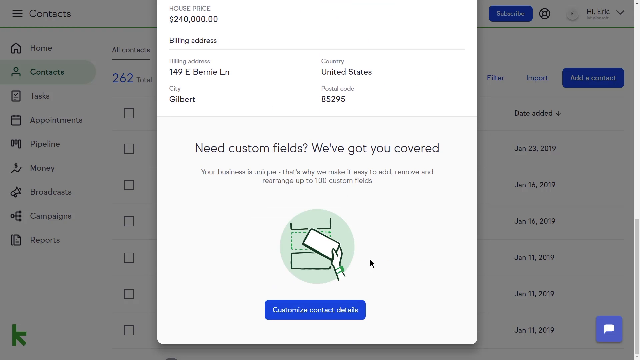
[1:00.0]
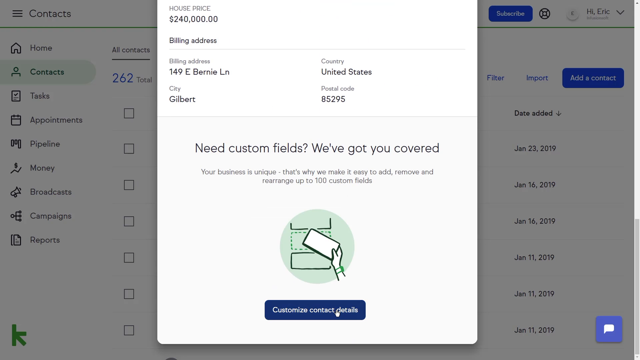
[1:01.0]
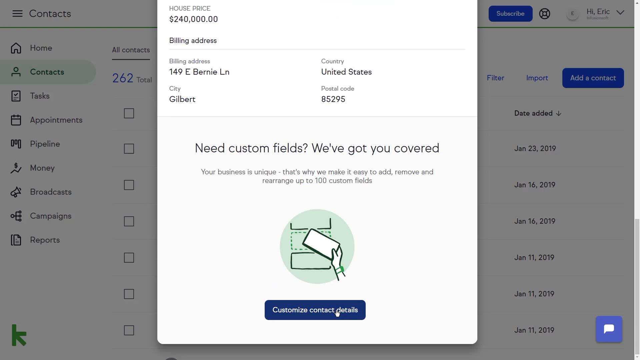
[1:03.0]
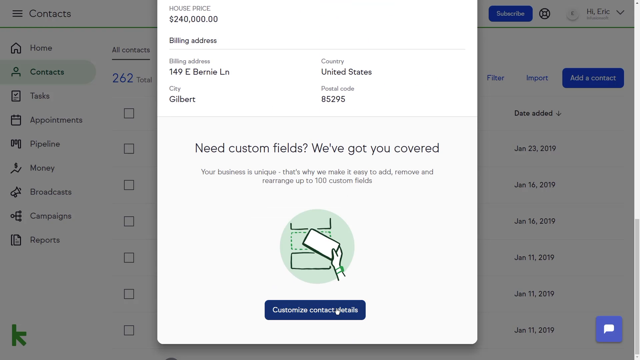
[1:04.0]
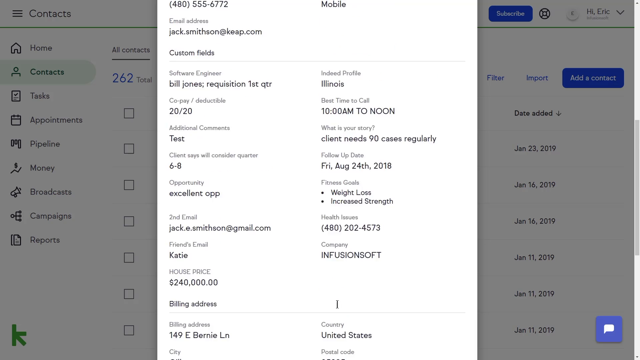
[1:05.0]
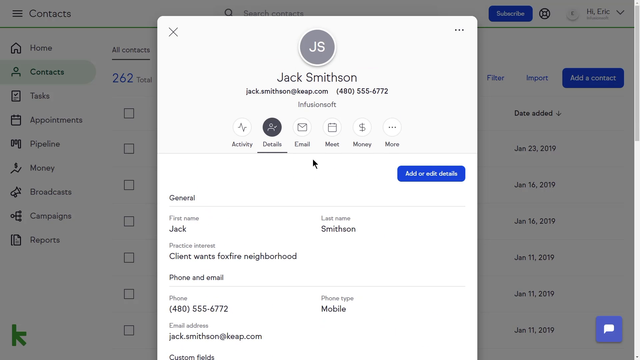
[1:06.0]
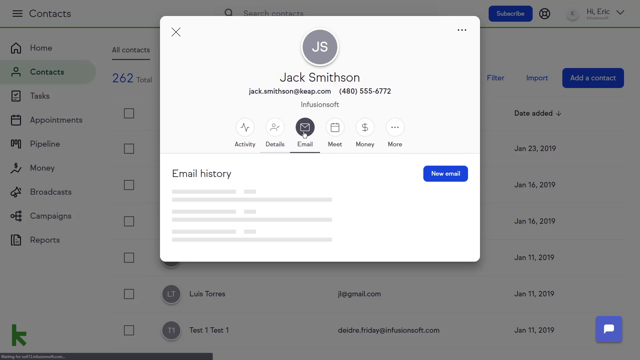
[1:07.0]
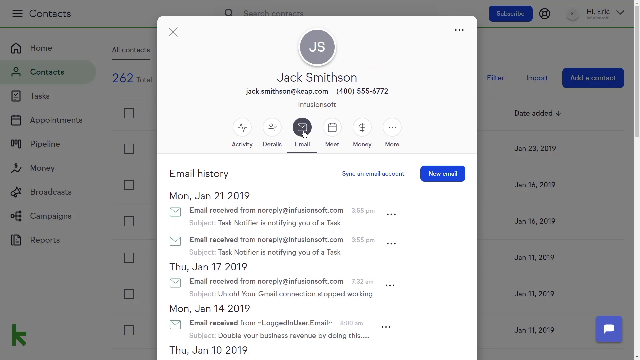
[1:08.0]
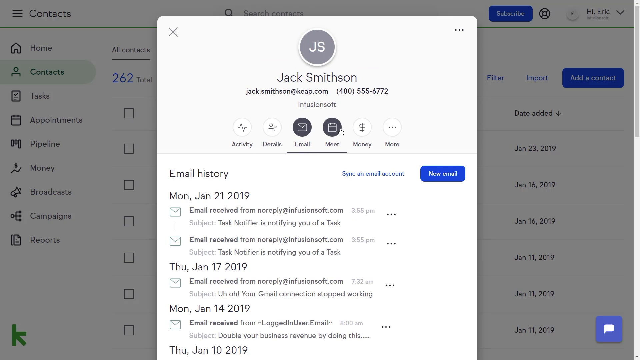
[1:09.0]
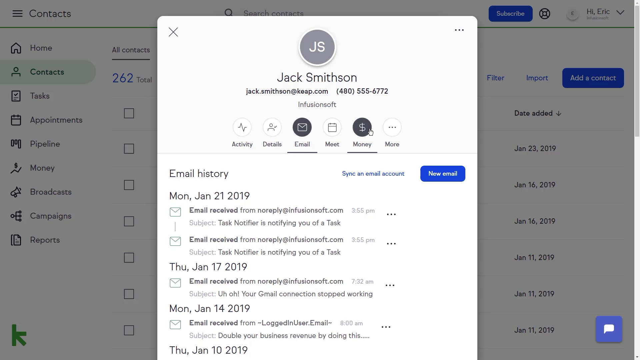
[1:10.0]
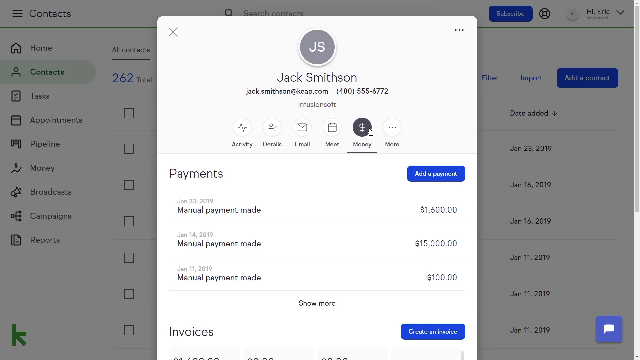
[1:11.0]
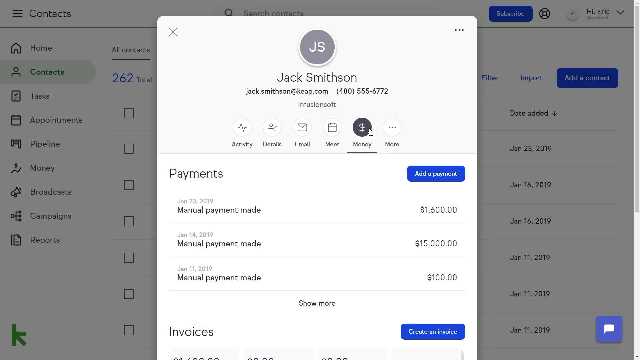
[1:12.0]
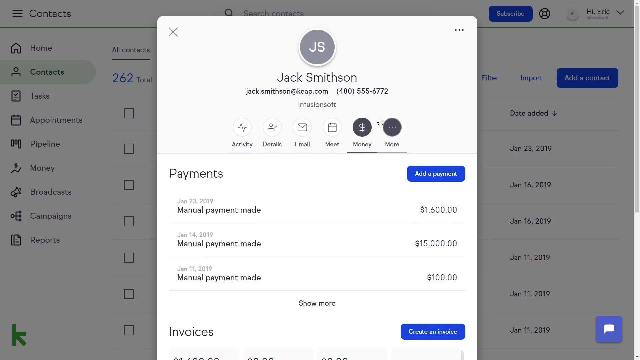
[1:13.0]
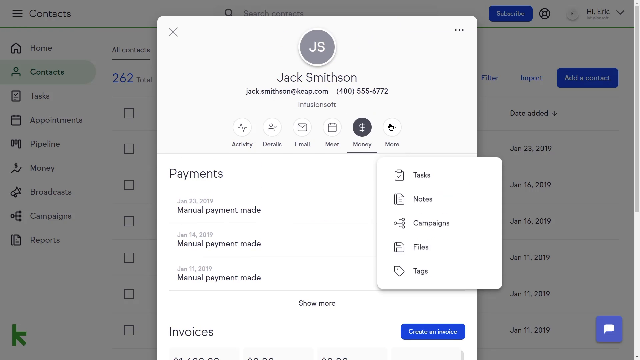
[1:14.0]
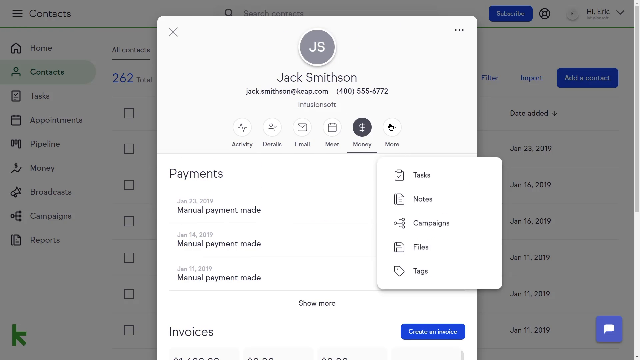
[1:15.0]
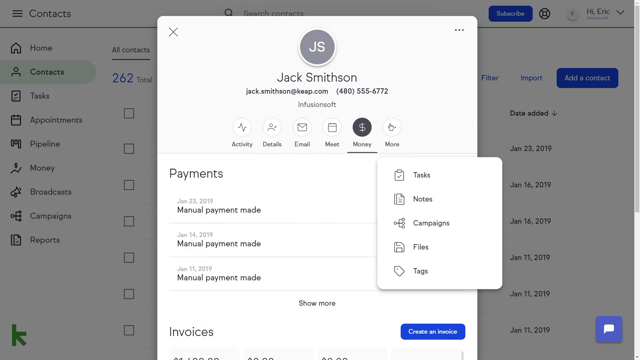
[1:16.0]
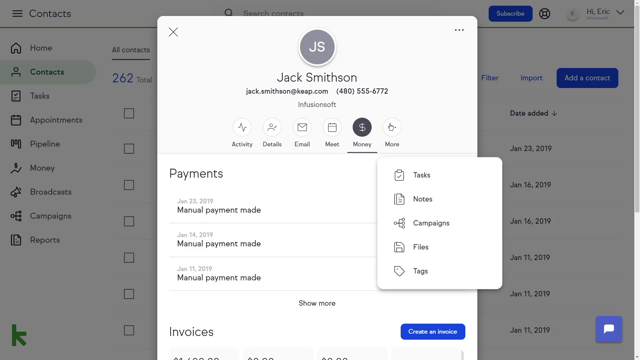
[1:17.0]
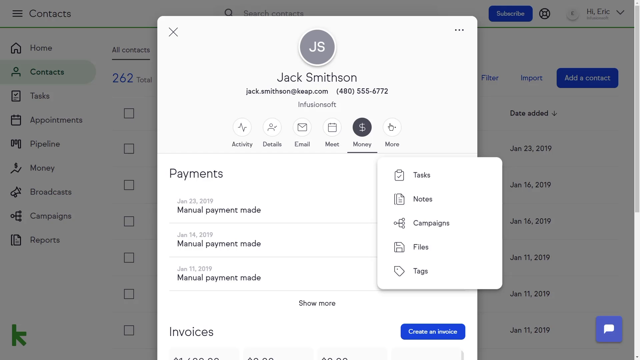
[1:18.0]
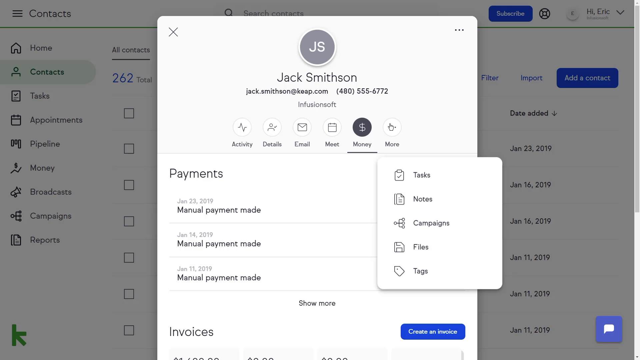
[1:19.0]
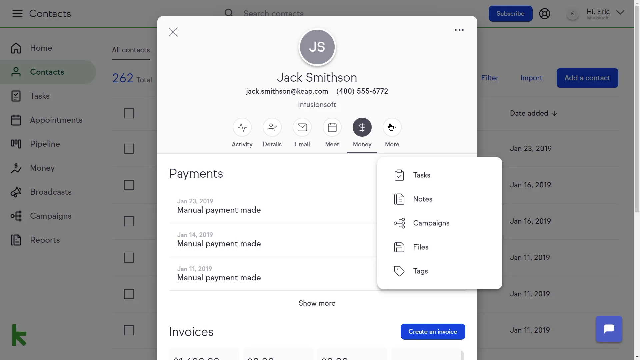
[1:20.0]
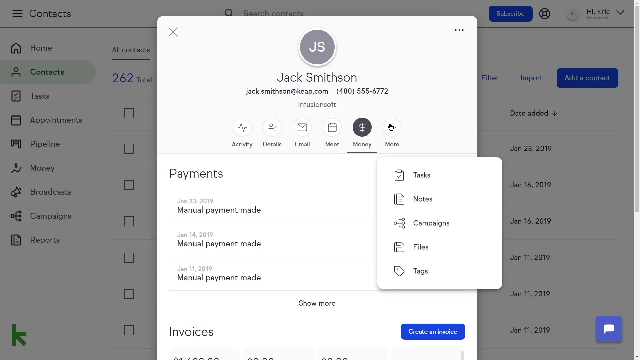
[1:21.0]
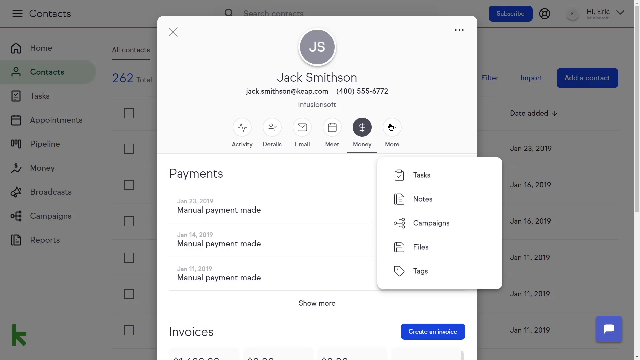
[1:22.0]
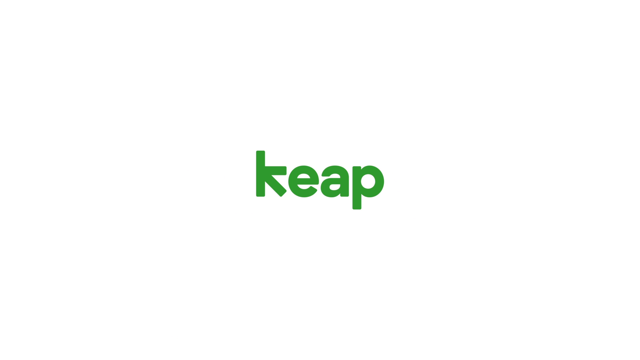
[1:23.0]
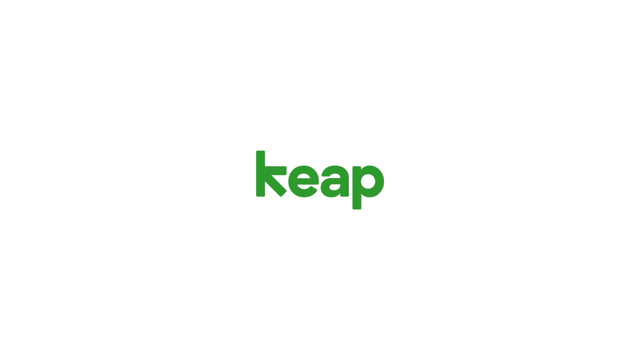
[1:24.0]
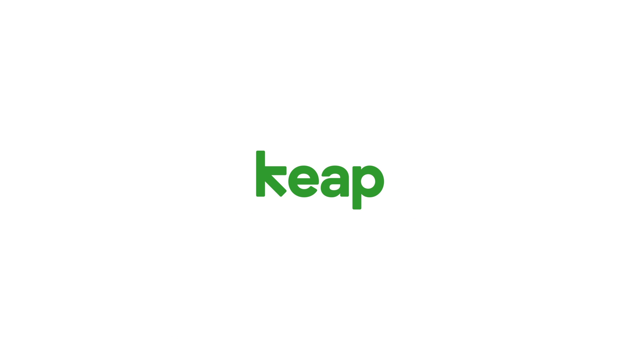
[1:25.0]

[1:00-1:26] The user interface of a computer program centered on lead generation, setting appointments, and organizing contacts is shown. The left-hand portion is a categorical or menu side panel with the options Home, Contacts, Tasks, Appointments, Pipeline, Money, Broadcast, Campaigns, and Reports, each with a picture icon representing the category. The middle portion shows details for a specific contact: at the top is a house price of $240,000, followed by the billing address and an action button to customize contact details. The mouse hovers over the customize contact details button before the user scrolls to the top of the page, bringing the contact's name, email address, and phone number into view. The mouse then clicks the email option icon, and email history appears in the middle portion of the panel. The user scrolls to the right and clicks the money category, and payment history is shown along with invoices and further action buttons.